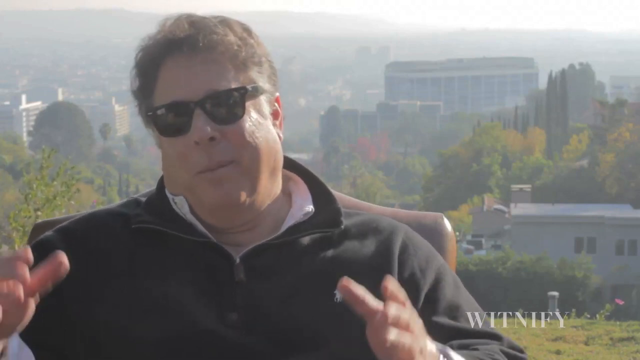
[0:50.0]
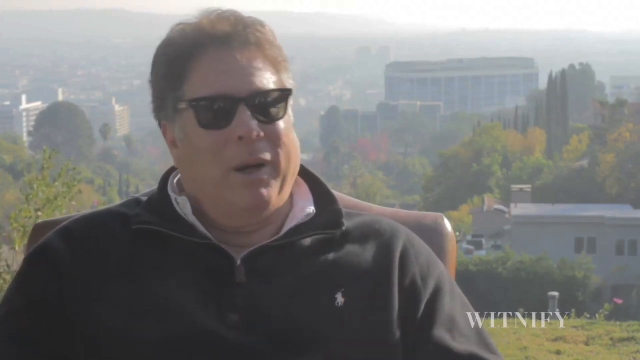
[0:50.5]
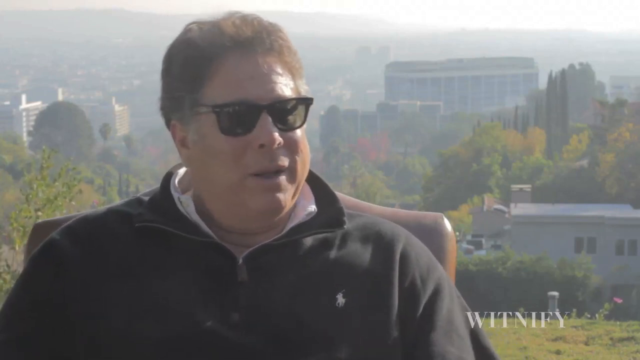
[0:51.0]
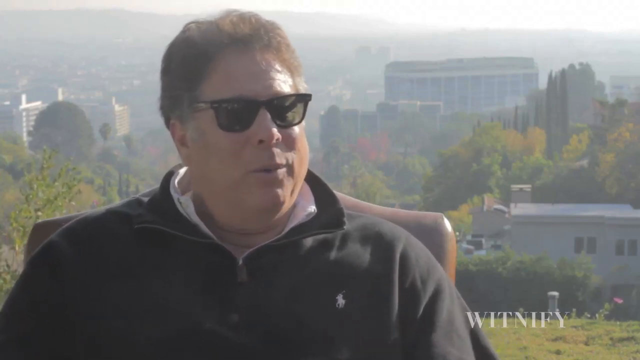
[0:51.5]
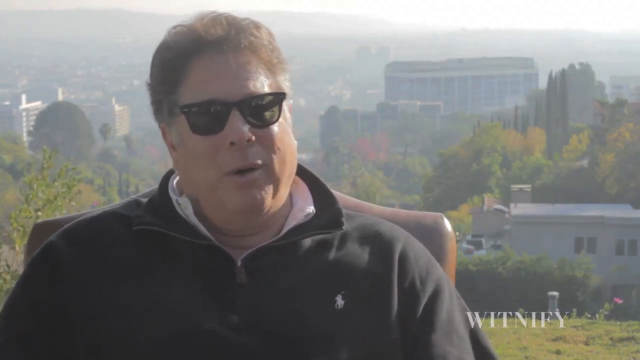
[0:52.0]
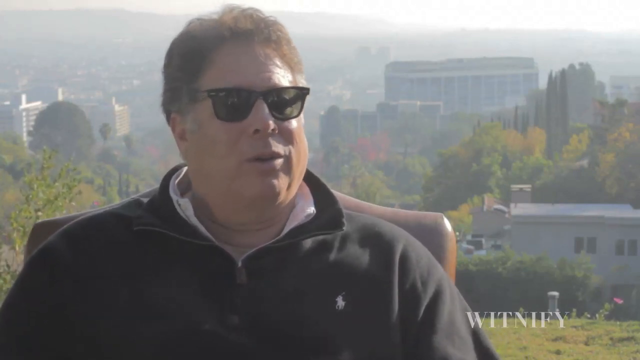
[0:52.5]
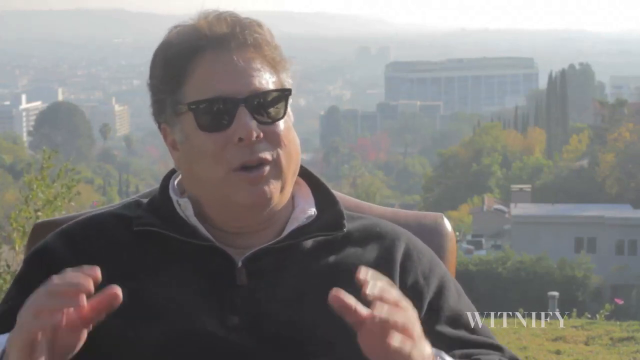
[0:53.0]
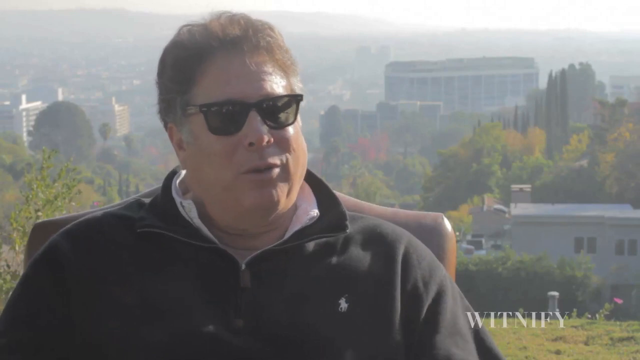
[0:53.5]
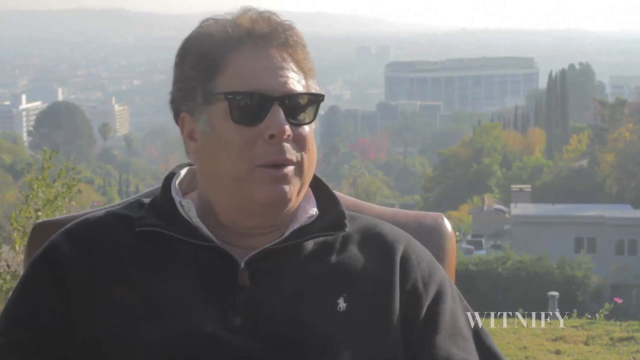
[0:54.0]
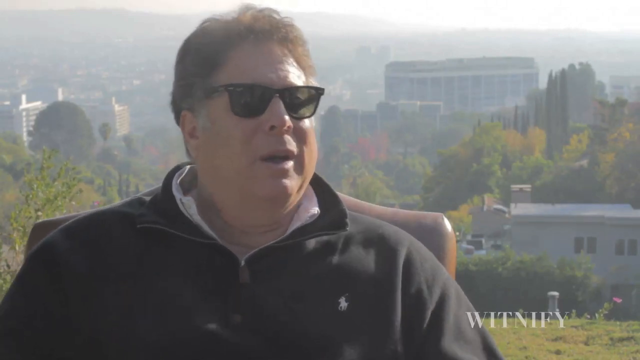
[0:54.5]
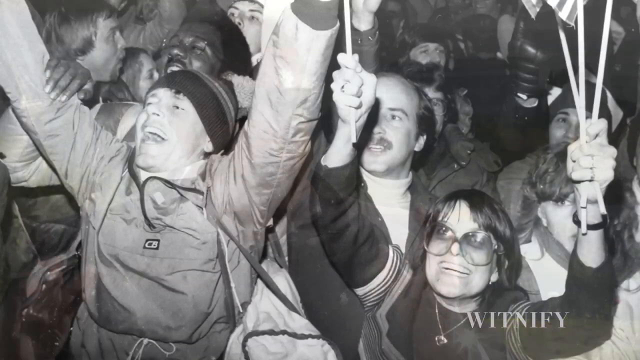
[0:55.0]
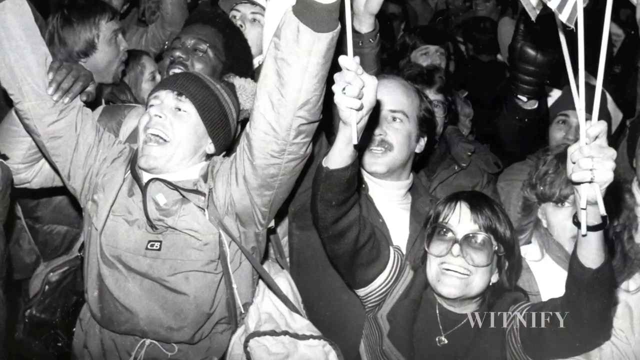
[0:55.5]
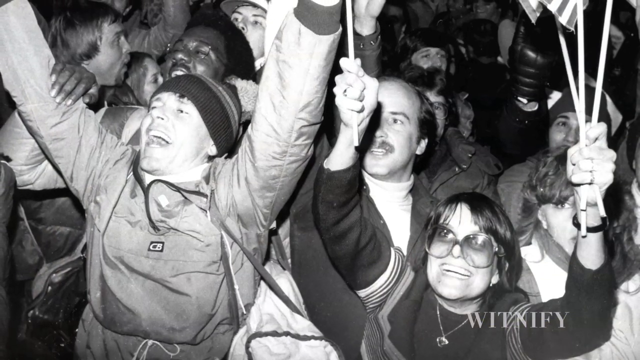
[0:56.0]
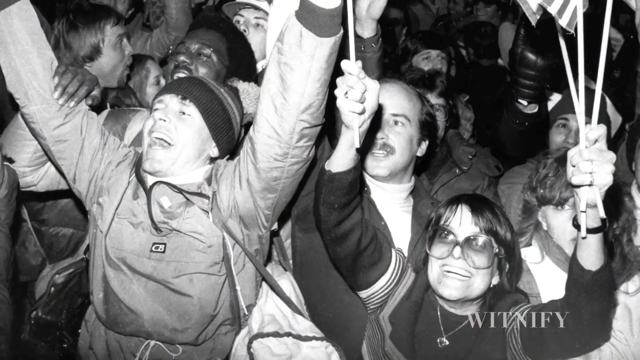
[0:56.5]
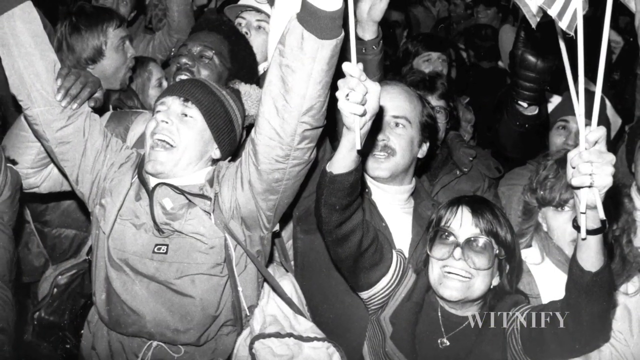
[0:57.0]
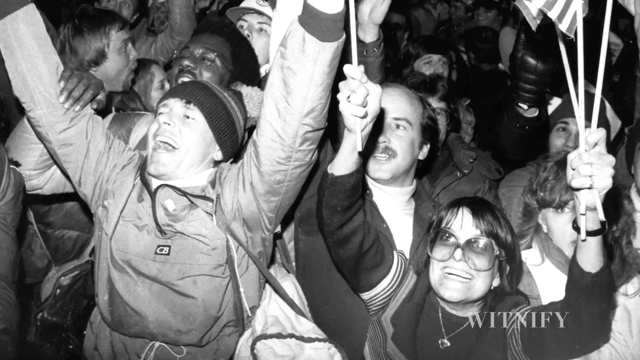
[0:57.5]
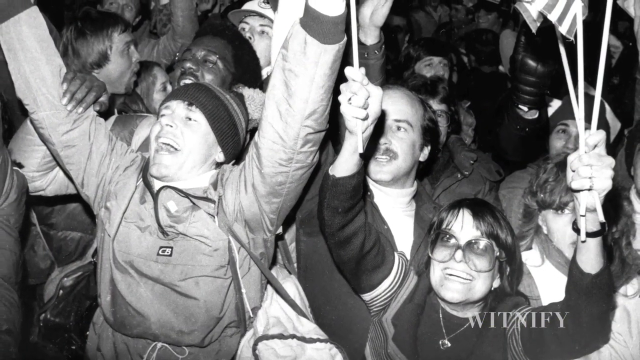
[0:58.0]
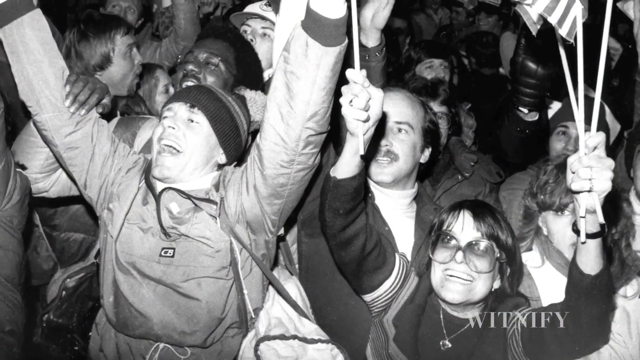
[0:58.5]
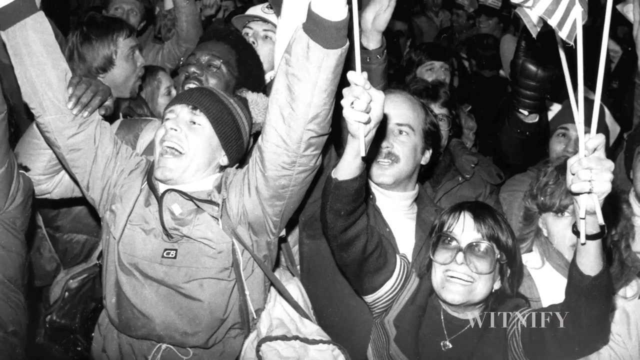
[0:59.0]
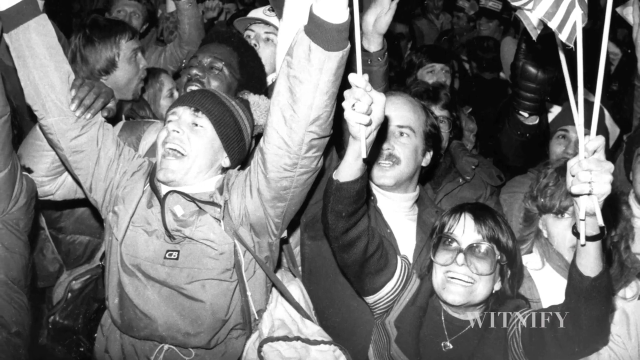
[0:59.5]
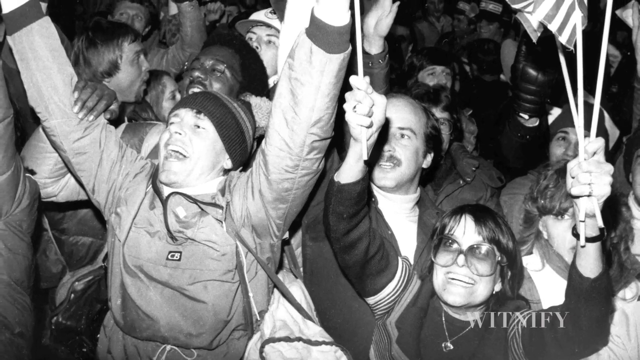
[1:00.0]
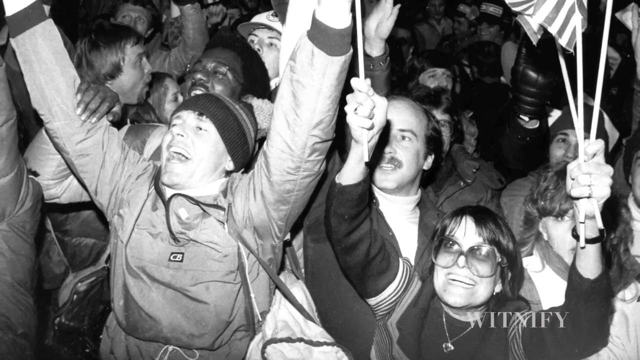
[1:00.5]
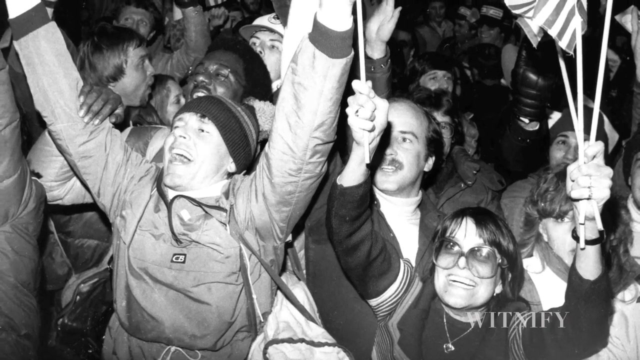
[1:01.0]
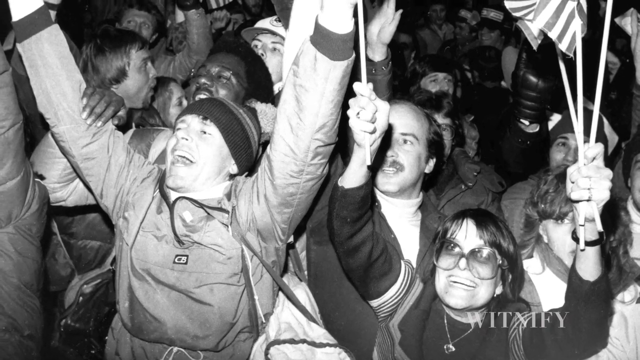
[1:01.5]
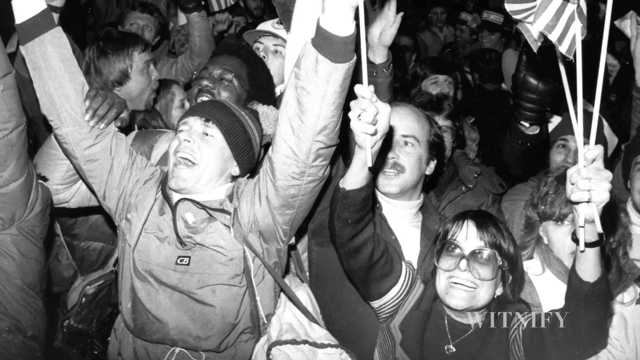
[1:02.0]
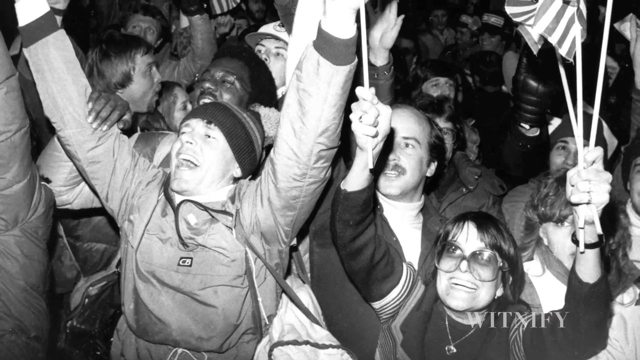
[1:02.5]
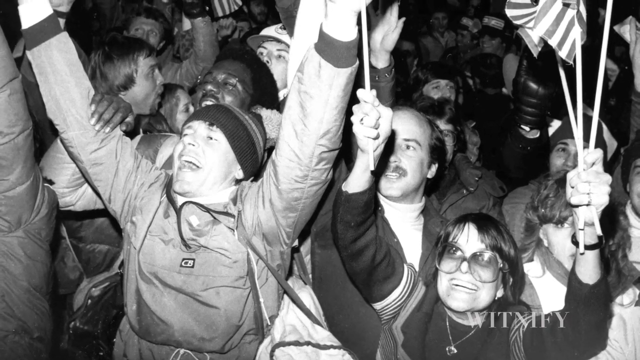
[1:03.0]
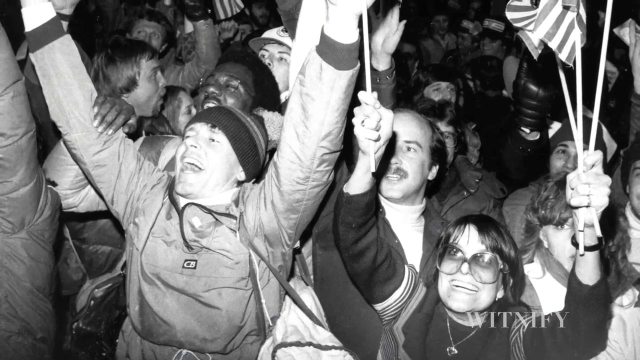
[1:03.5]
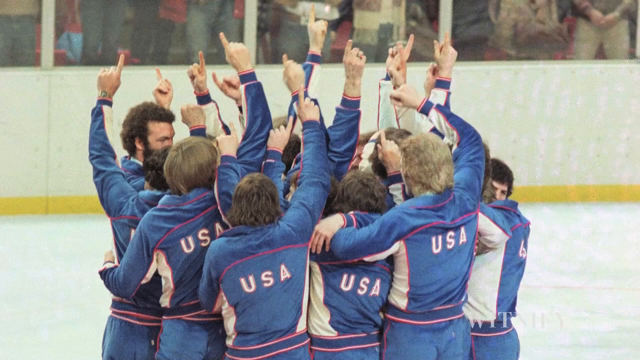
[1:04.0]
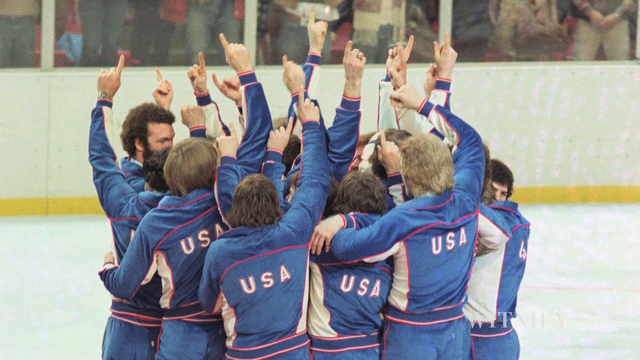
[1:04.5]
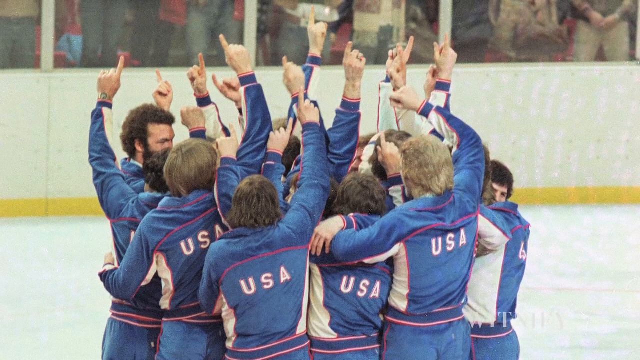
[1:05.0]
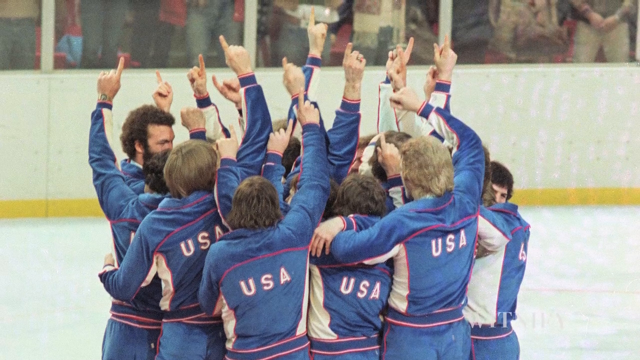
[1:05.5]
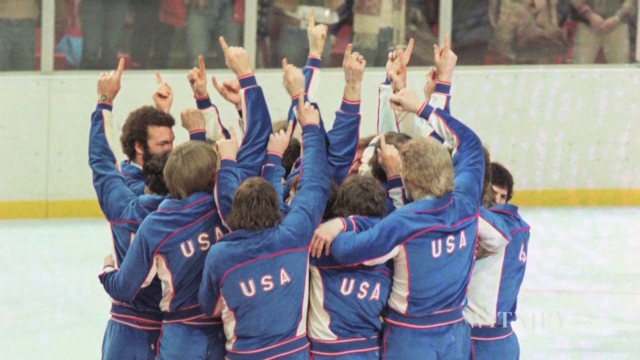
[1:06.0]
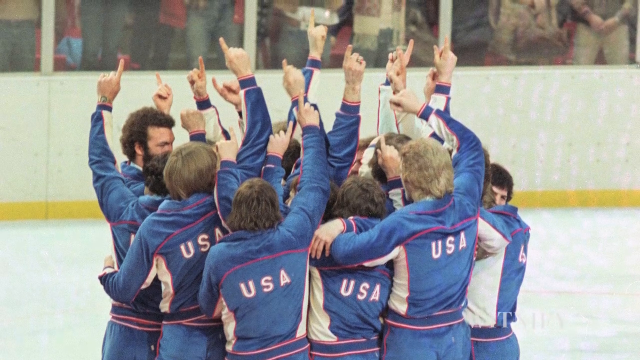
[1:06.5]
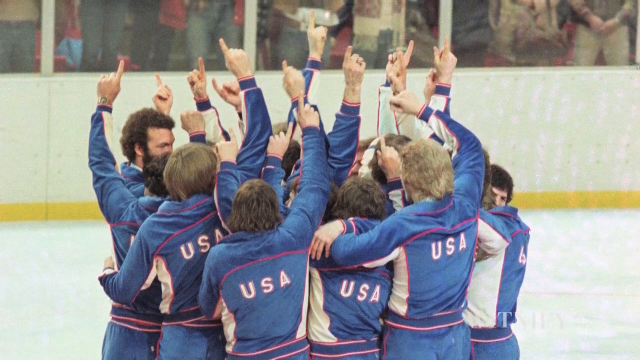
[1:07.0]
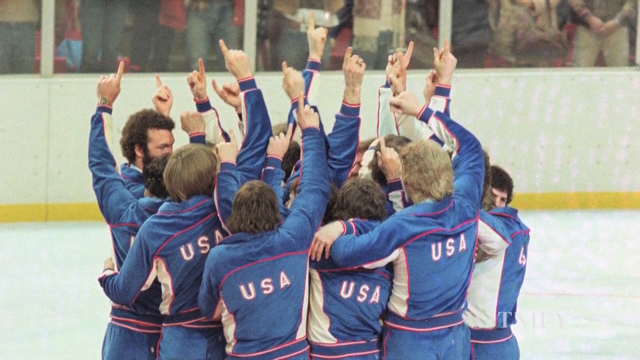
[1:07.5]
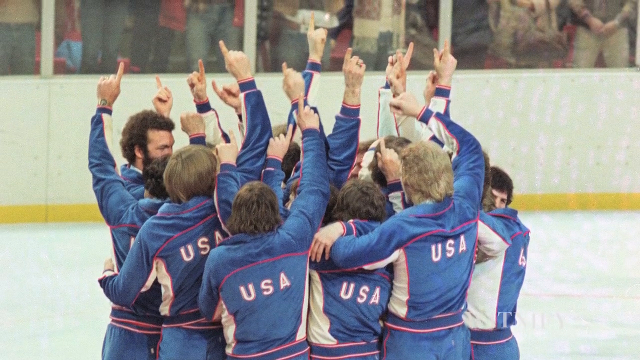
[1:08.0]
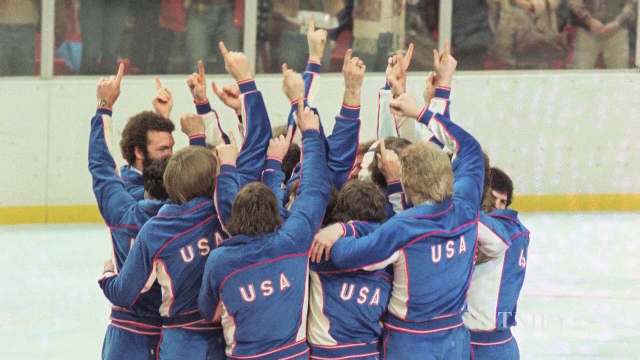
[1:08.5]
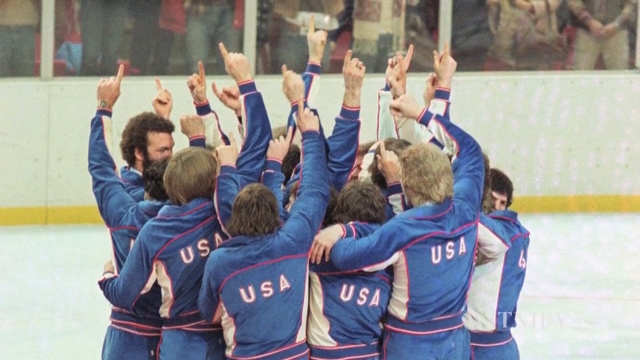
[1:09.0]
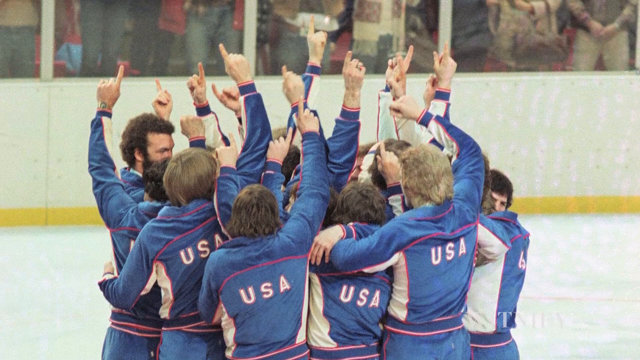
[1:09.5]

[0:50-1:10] David Israel, wearing sunglasses and a black fleece sweater, continues to speak into the camera and uses his hands to make a point. A black-and-white image of people cheering emphatically follows. A very happy man in a jacket and winter hat has his hands straight up in the air and is yelling. Next to him, a girl with big sunglasses smiles while holding American flags in both hands with her arms extended. A balding man with a mustache behind her also seems to be cheering, and other people are in the background; everyone looks happy. The next photo is in color: Team USA hockey is huddled up on the ice, not in uniform but all wearing the same blue USA jackets. Everyone in the photo has their hands raised with their index fingers pointed to the sky, and they seem happy in the embrace.